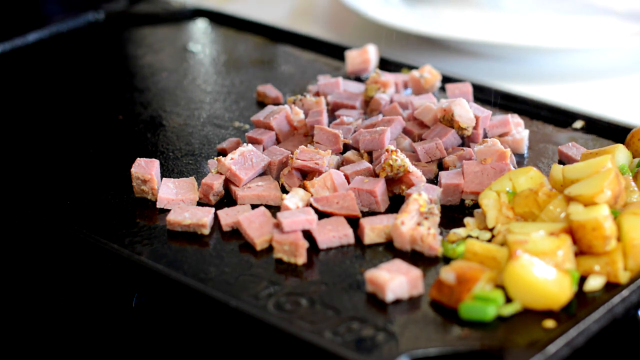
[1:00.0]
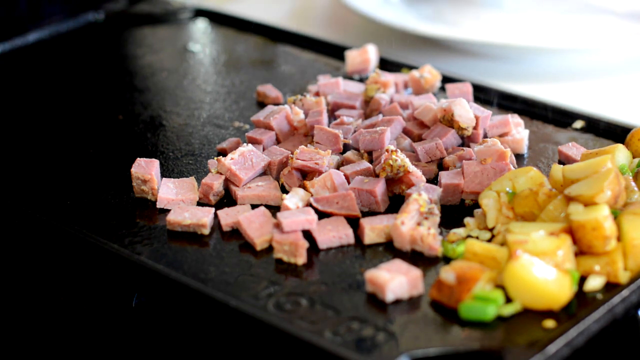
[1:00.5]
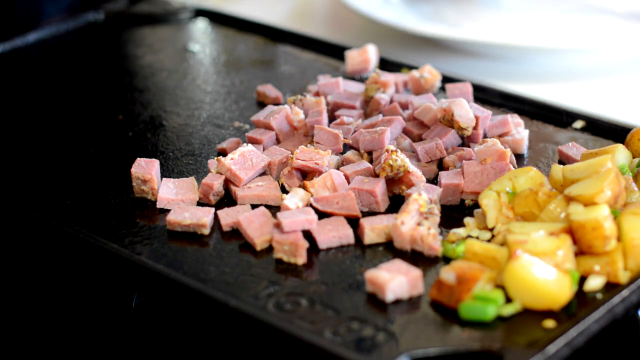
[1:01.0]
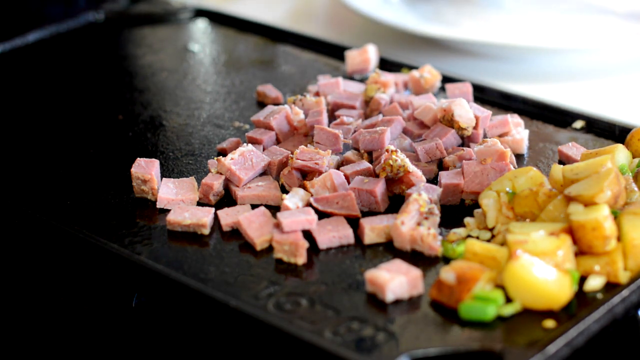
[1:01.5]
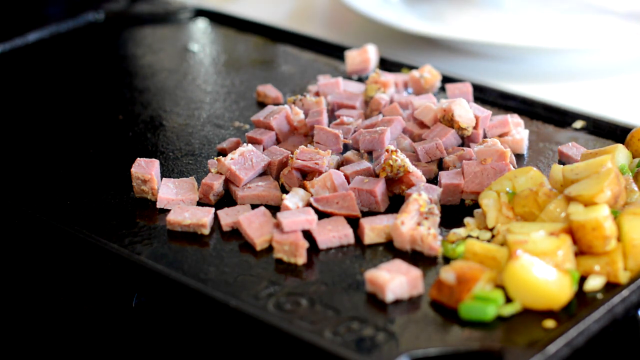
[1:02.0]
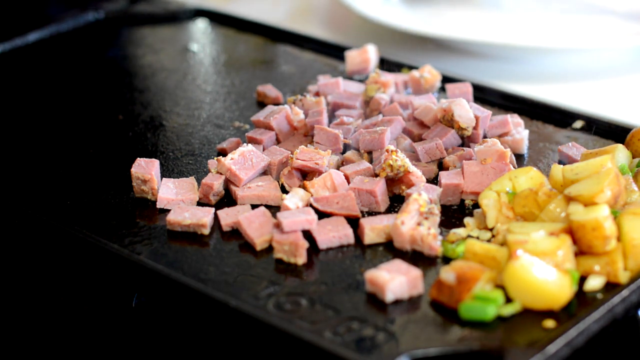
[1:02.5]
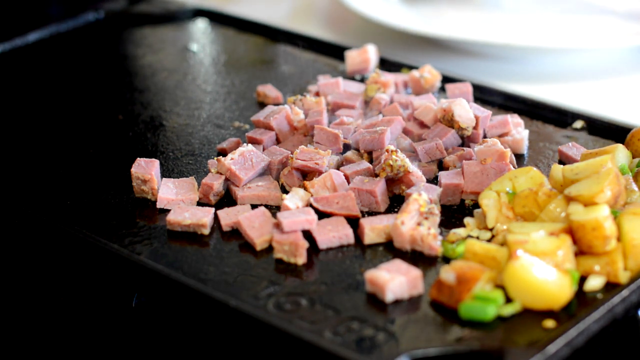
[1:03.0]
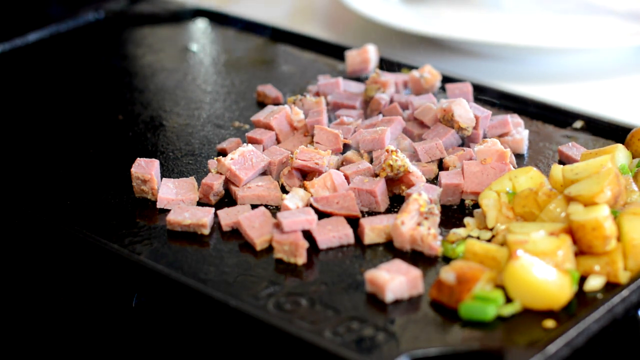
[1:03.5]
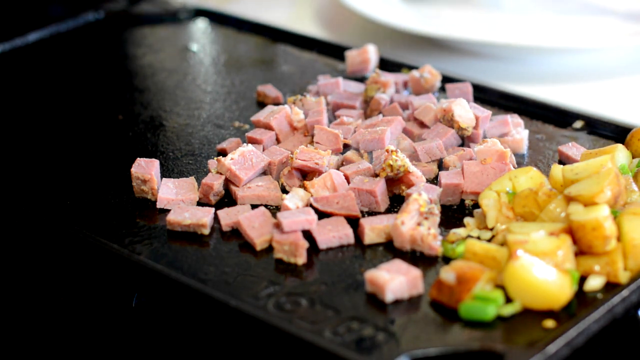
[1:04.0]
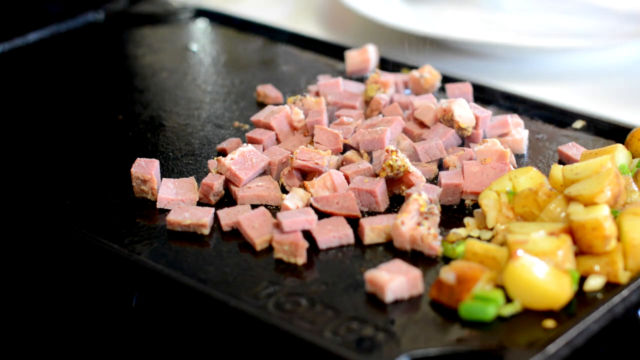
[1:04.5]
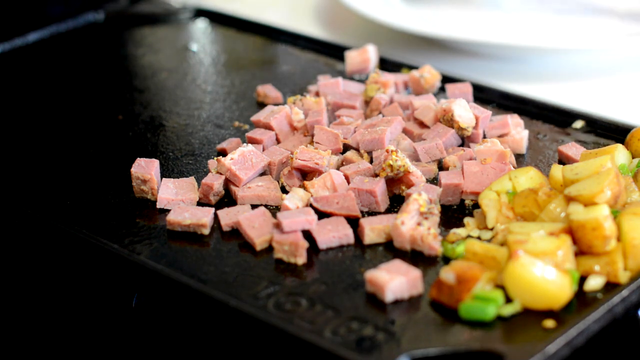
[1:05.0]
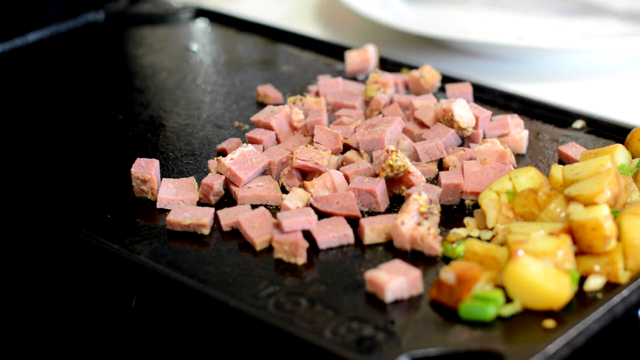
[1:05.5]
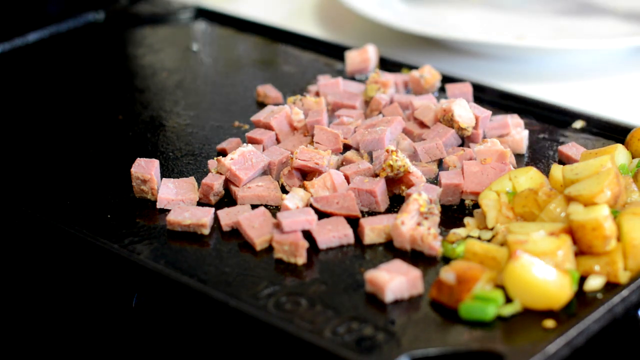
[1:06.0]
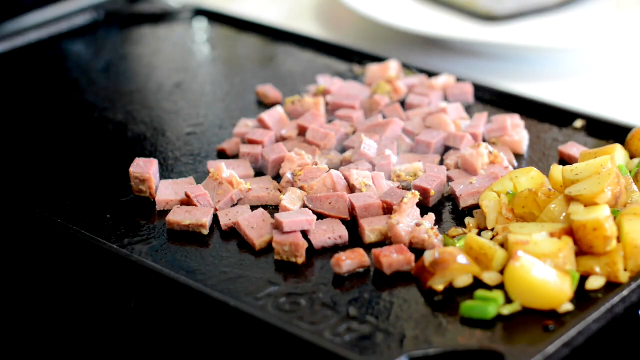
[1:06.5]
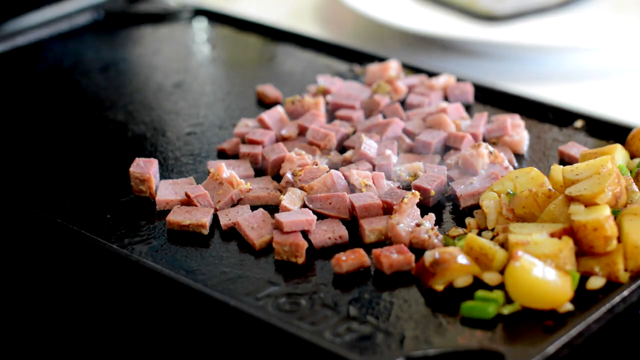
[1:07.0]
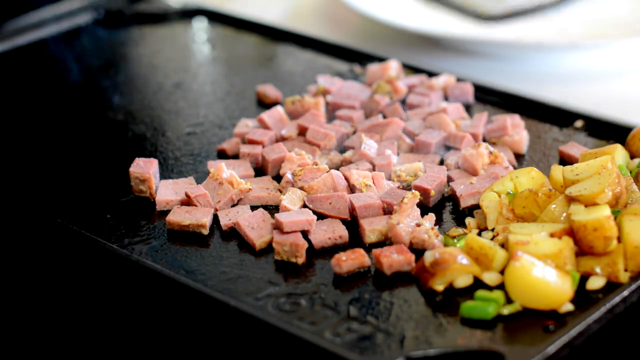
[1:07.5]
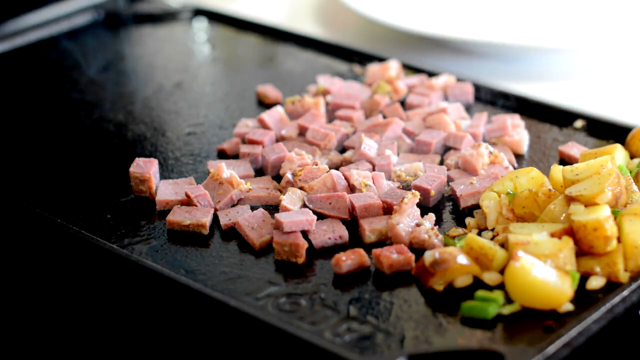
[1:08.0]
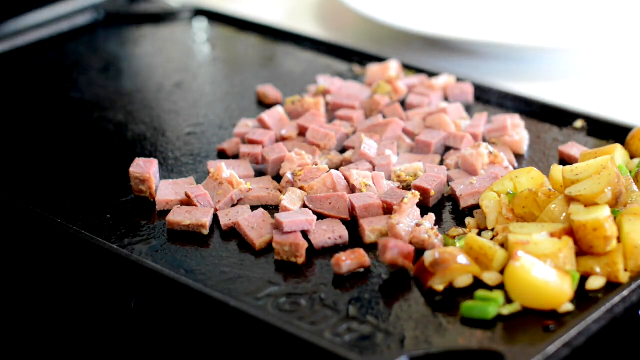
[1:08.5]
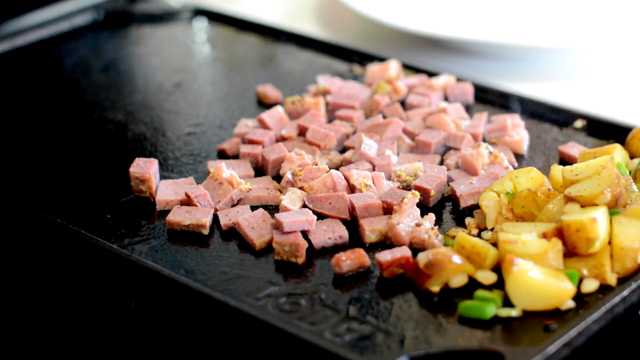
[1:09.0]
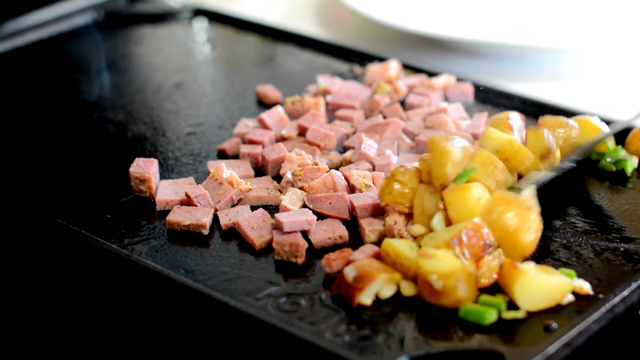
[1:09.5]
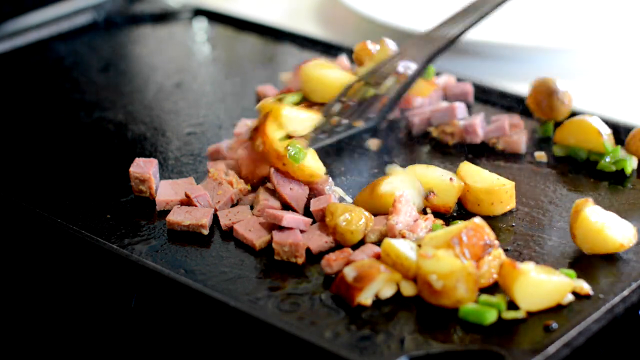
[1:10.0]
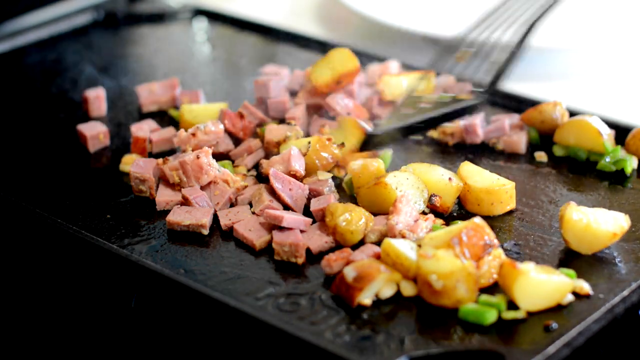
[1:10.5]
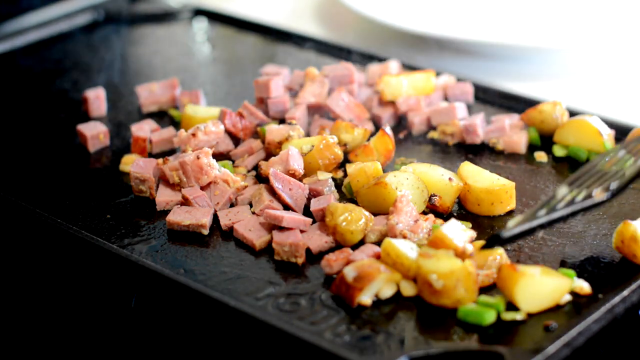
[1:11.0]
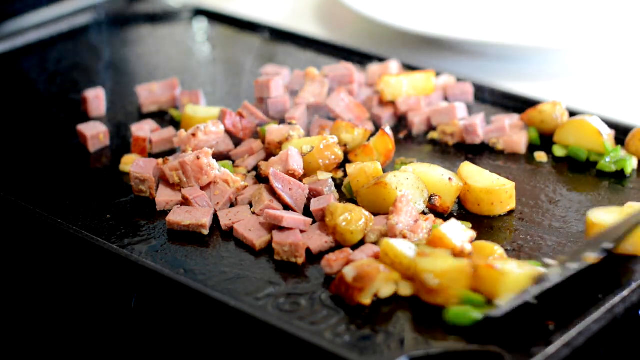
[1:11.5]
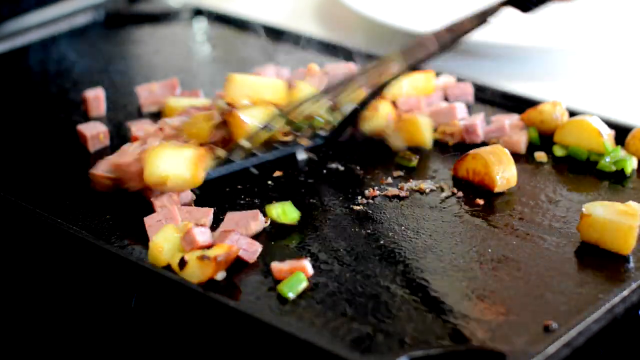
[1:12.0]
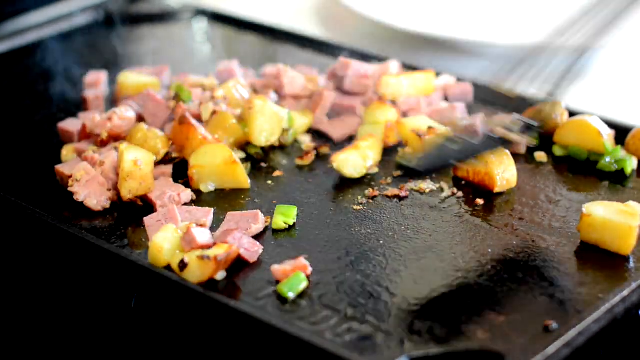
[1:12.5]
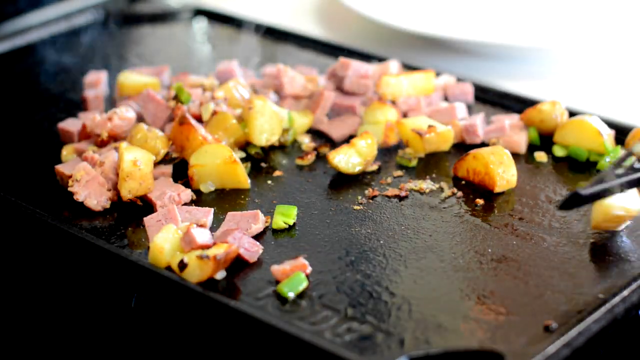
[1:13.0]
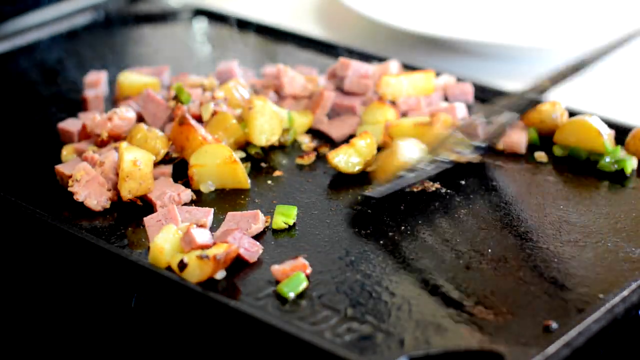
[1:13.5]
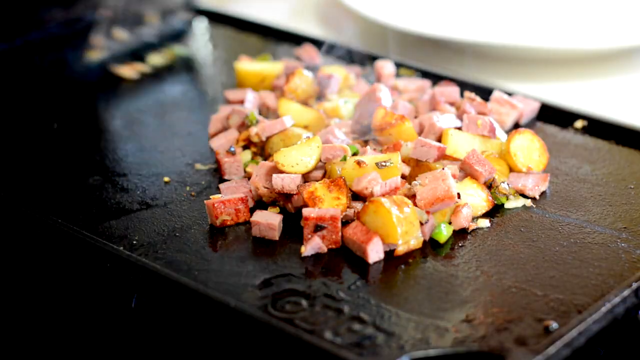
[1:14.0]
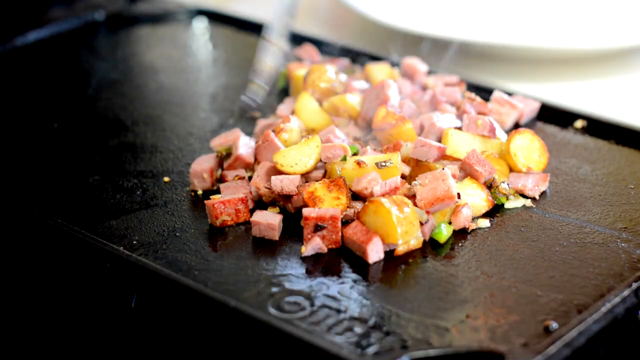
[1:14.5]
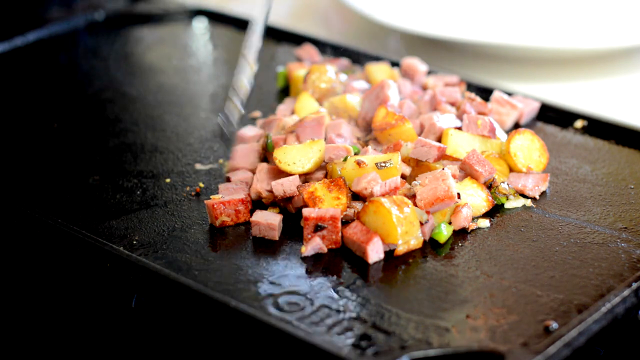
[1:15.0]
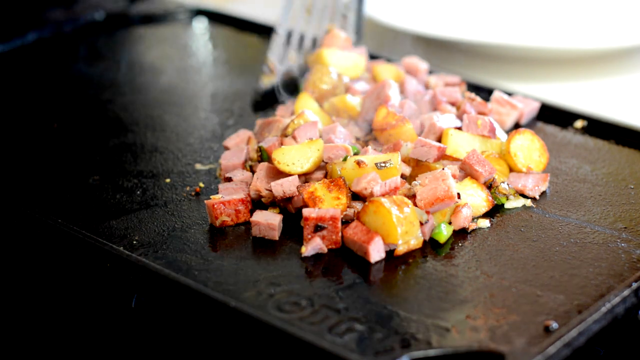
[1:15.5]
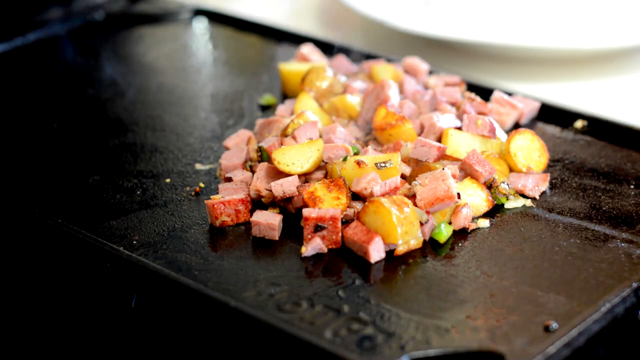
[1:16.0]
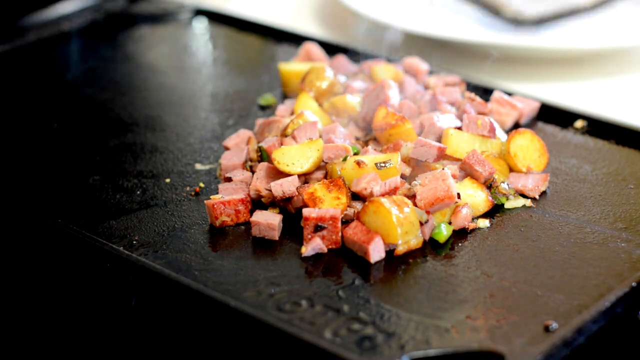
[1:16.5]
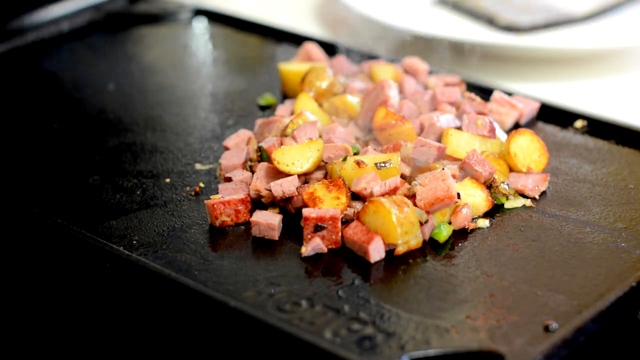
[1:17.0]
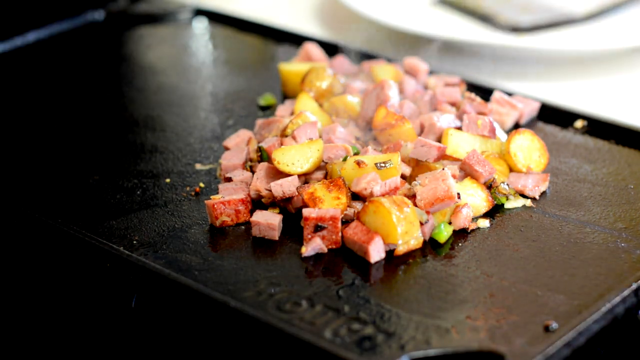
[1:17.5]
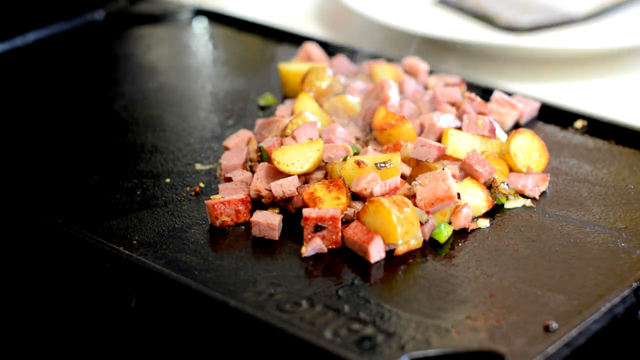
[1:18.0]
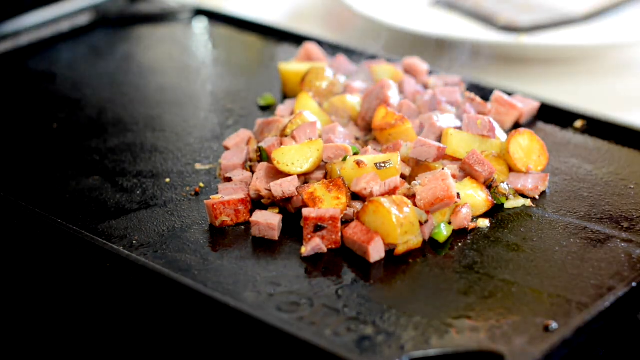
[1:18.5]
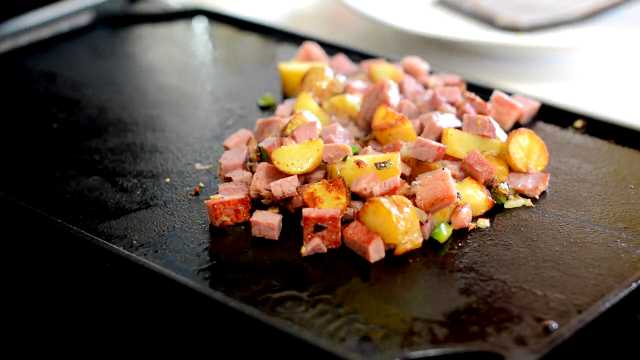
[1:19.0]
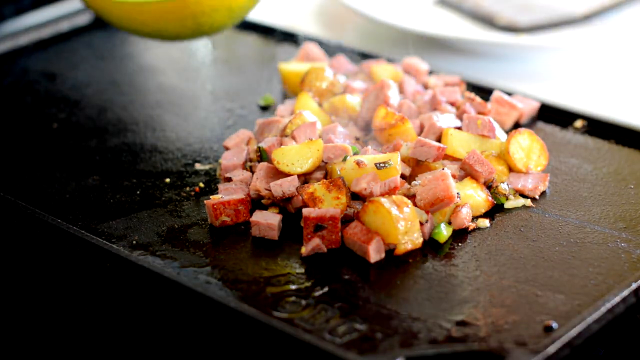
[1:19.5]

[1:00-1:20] Small cubes of meat that looks like ham are cooking in the center of a black, flat cooking grill, with smoke coming up off them and some bubbling from the oil underneath. On the right side of the grill is a bunch of already-cooked potatoes sitting on the side. The video skips forward to when the meat is fully cooked, and a spatula comes over to the potatoes on the right side and pushes them in with the meat, mixing them together. The scene then changes to the potatoes, the meat and some small cut-up vegetables piled together in the center of the black cooking grill.